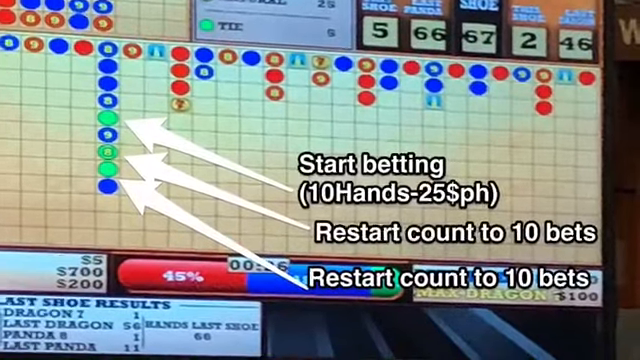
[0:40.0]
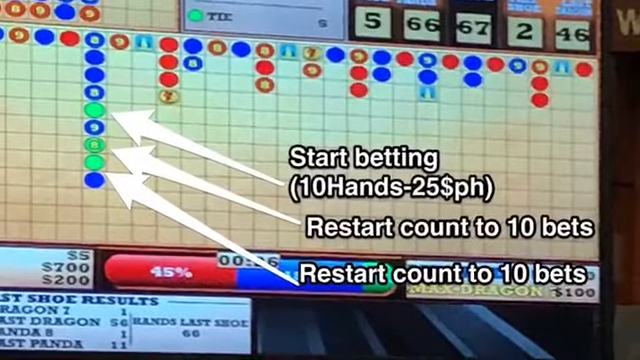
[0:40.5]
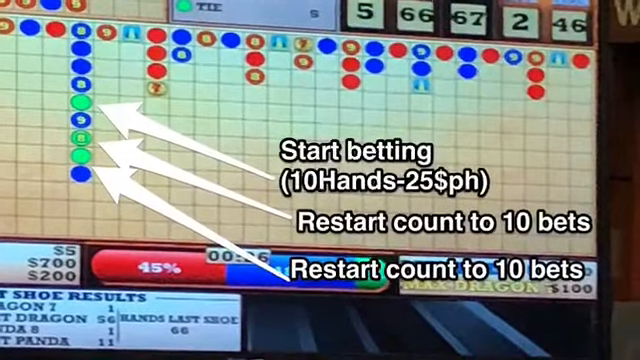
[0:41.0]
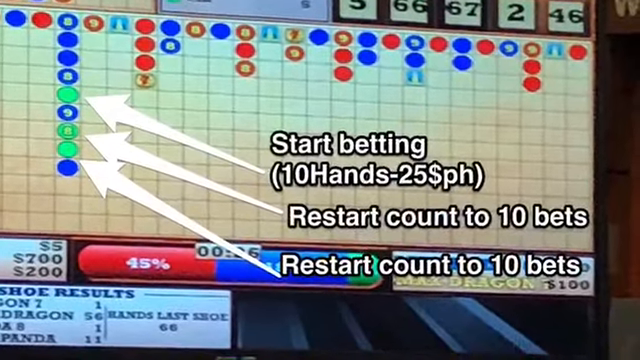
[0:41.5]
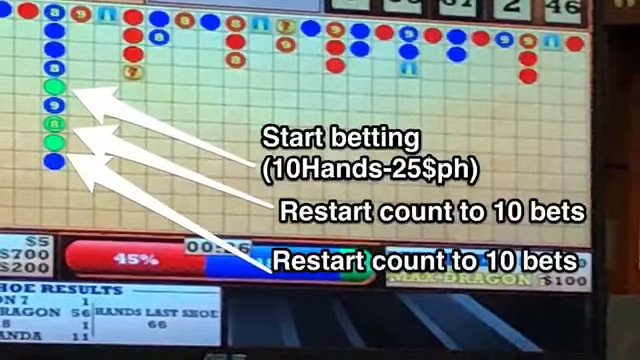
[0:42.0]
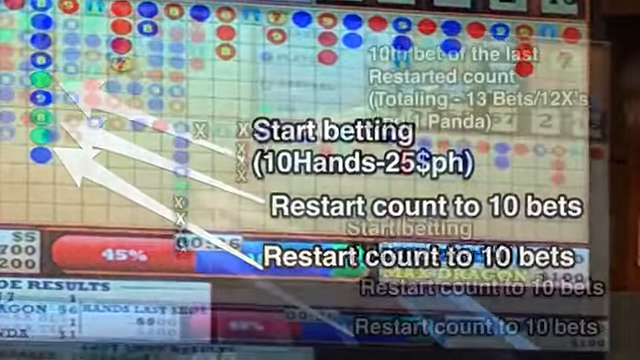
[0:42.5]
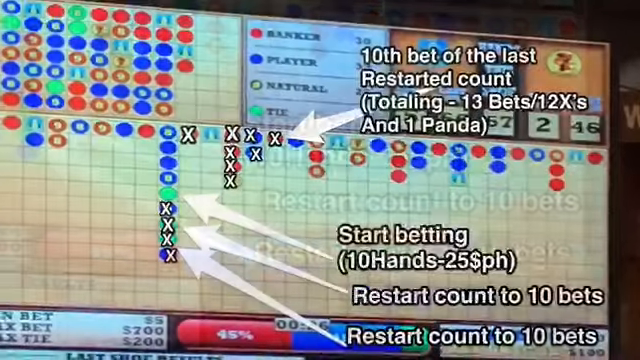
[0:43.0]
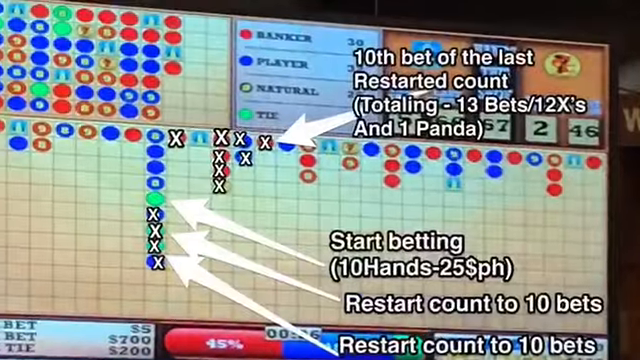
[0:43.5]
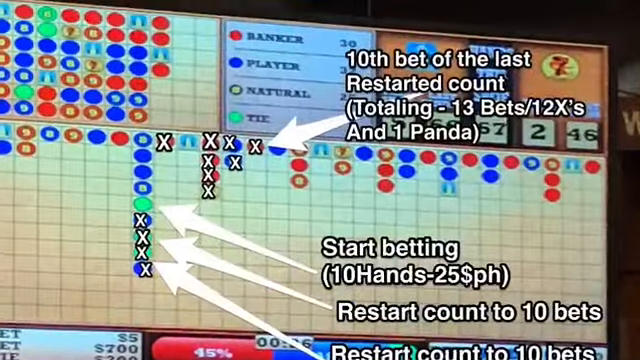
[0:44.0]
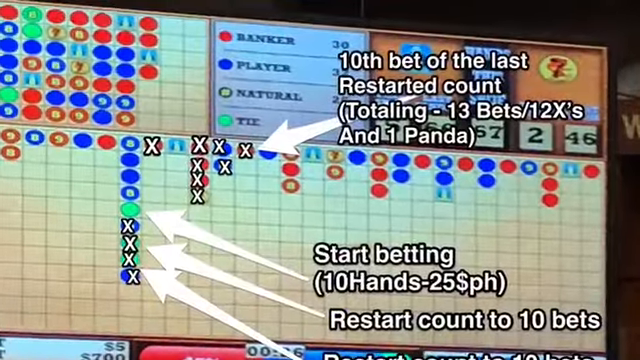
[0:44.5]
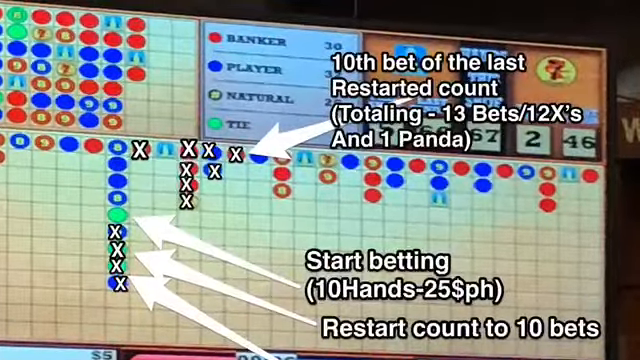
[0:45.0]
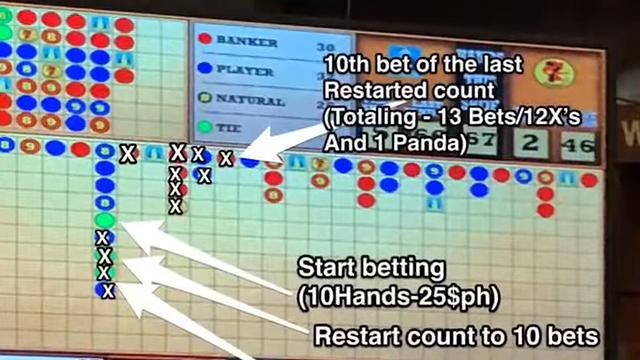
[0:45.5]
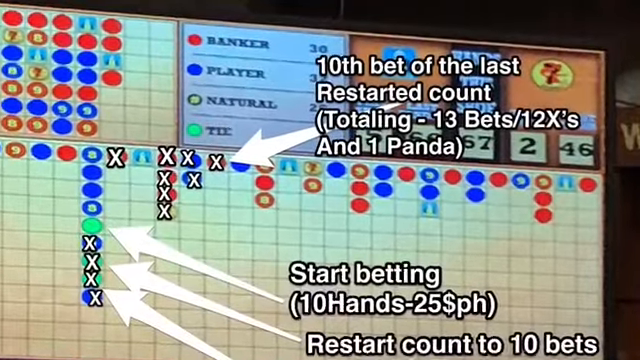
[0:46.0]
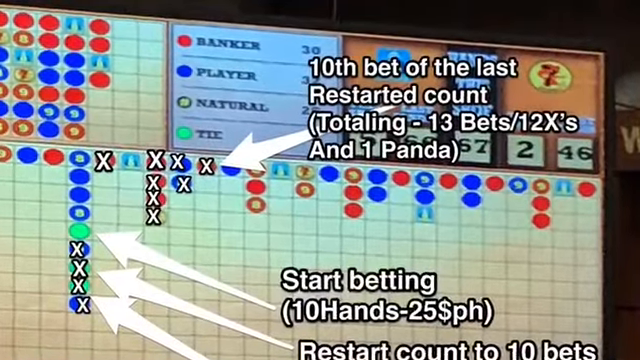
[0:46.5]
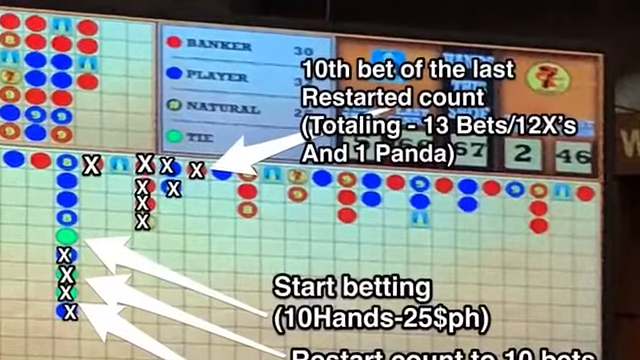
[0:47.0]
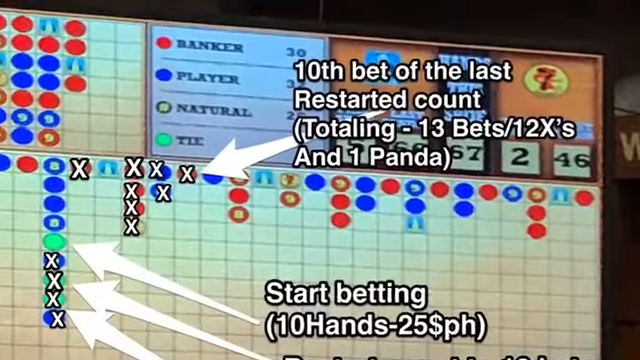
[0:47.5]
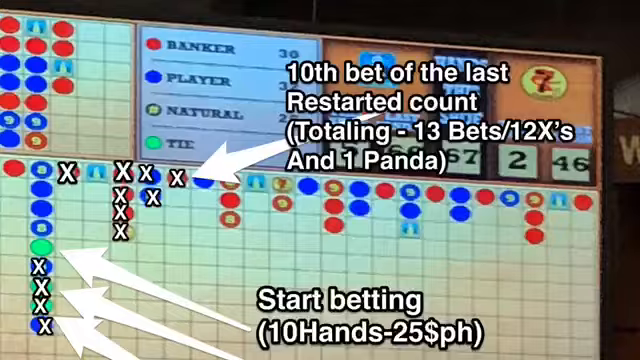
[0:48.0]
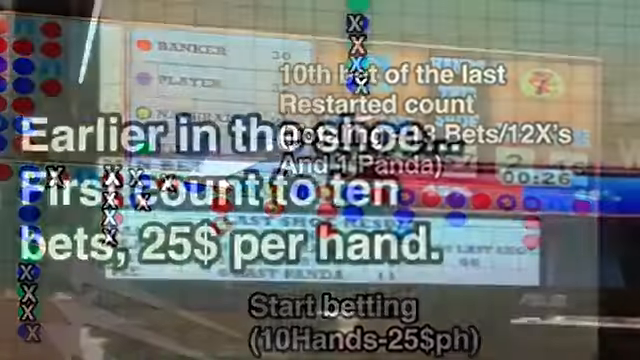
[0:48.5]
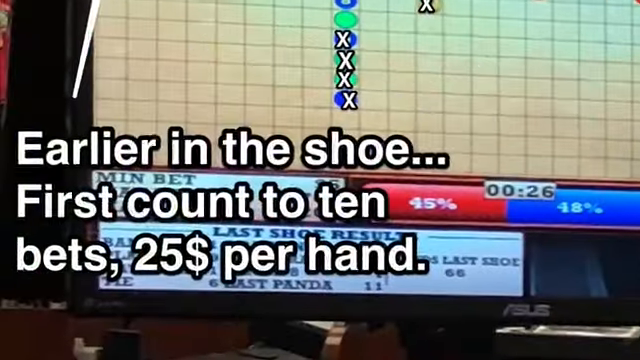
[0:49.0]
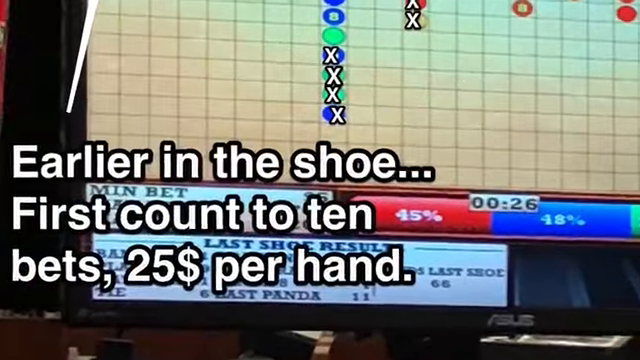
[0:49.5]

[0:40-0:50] Another hand of baccarat is played, with chips stacked up.